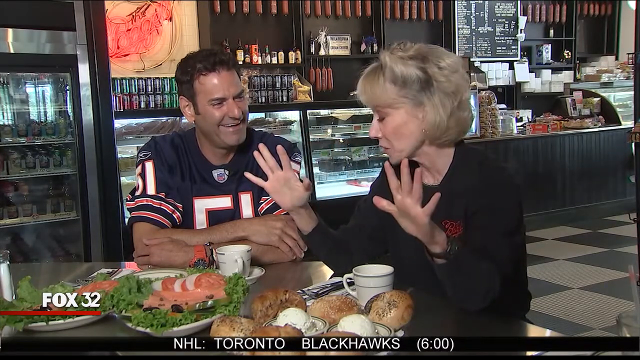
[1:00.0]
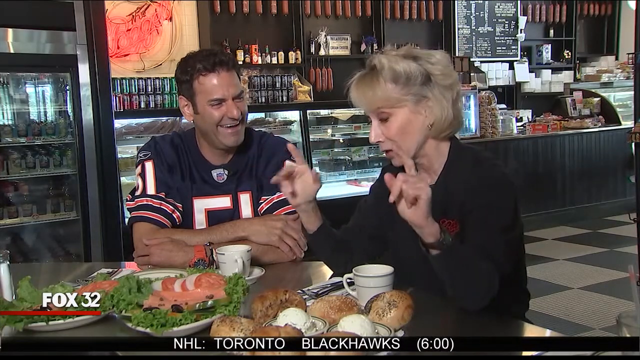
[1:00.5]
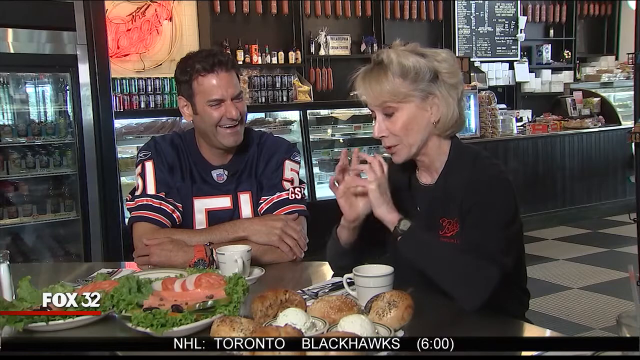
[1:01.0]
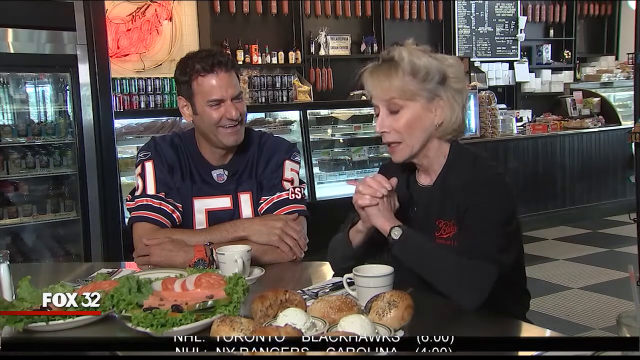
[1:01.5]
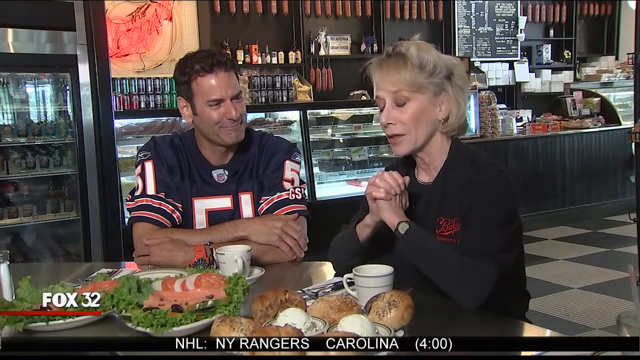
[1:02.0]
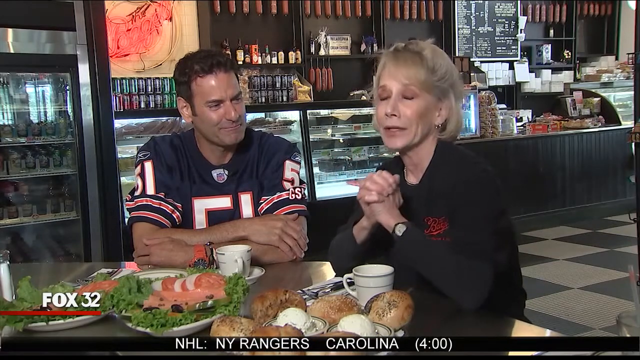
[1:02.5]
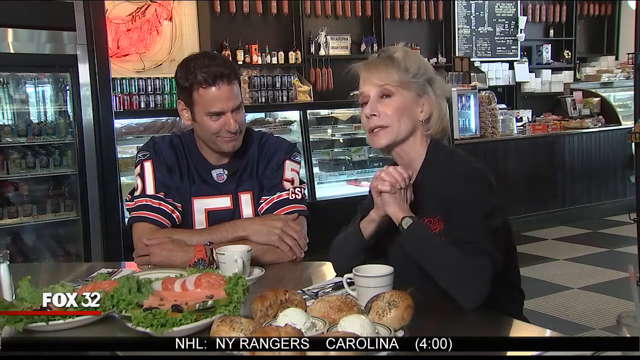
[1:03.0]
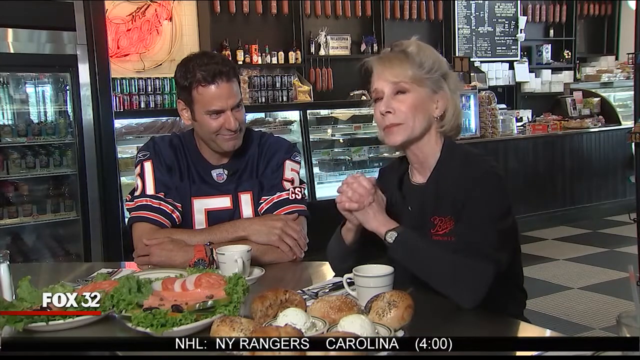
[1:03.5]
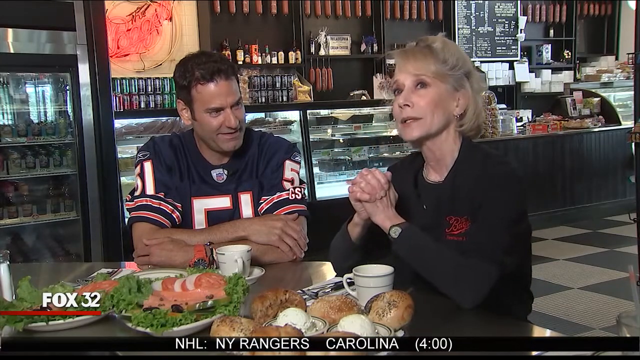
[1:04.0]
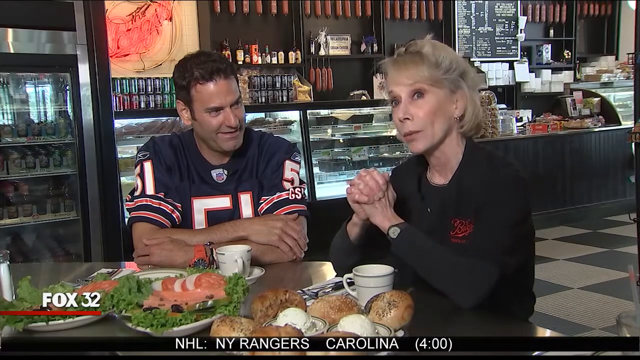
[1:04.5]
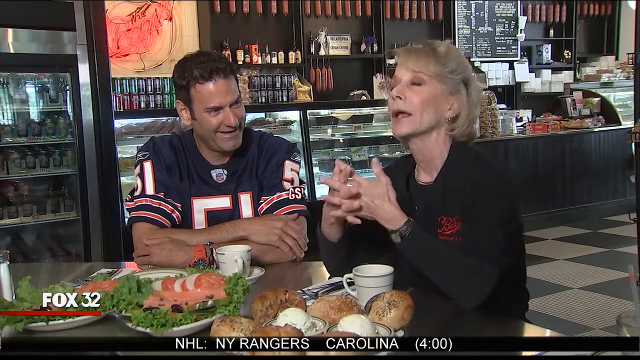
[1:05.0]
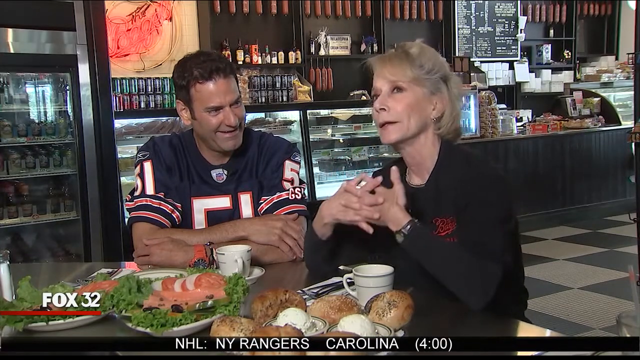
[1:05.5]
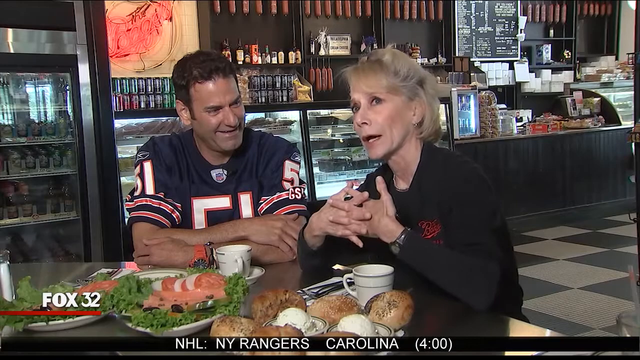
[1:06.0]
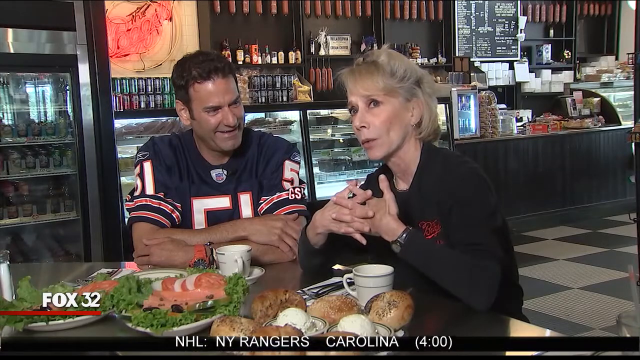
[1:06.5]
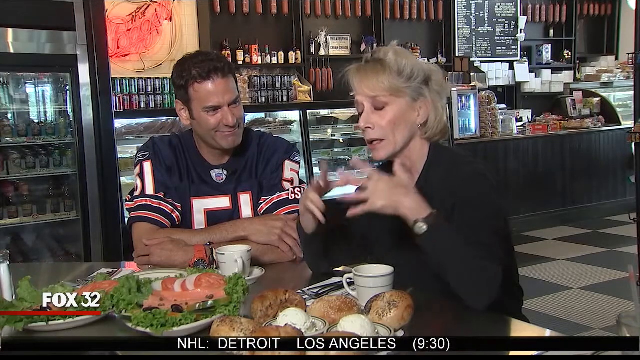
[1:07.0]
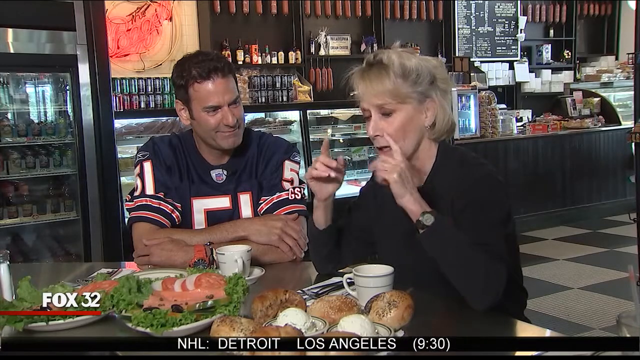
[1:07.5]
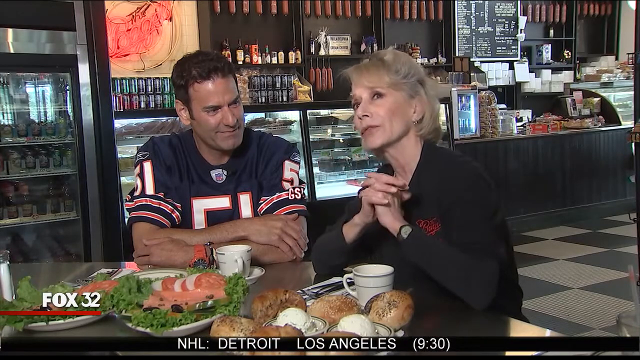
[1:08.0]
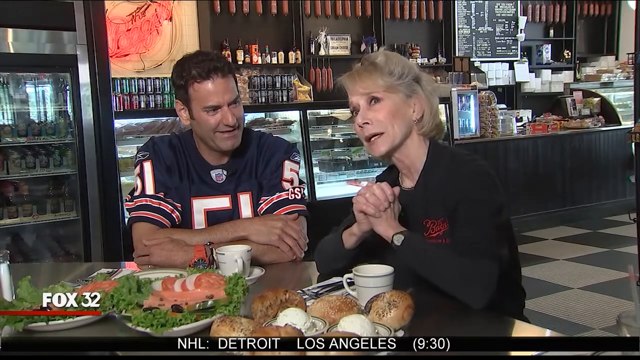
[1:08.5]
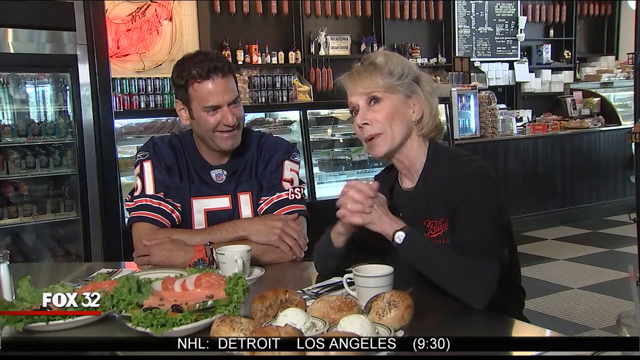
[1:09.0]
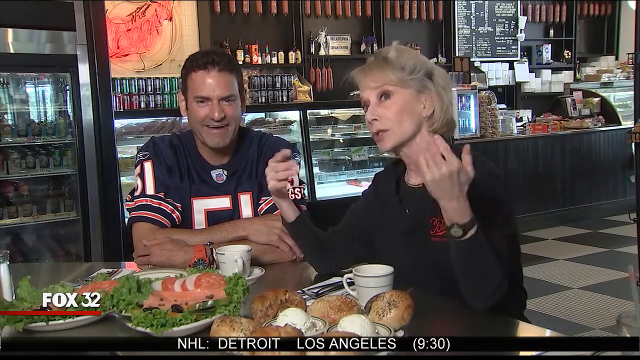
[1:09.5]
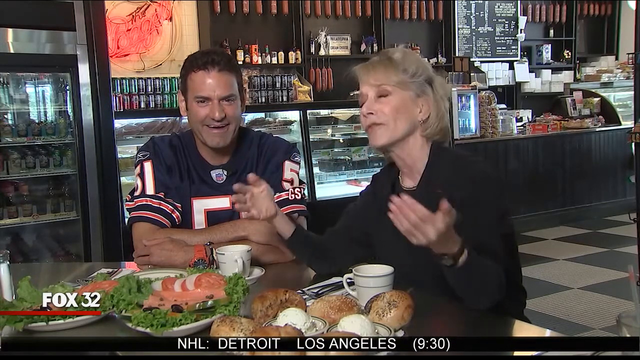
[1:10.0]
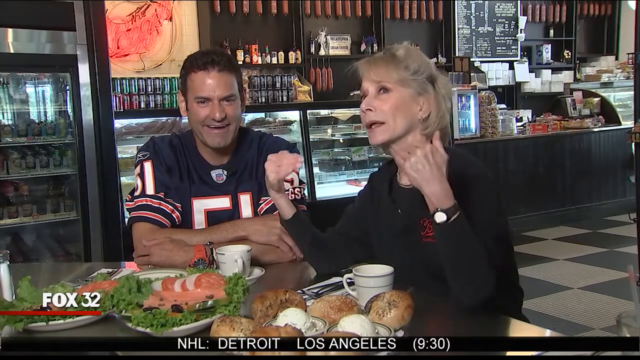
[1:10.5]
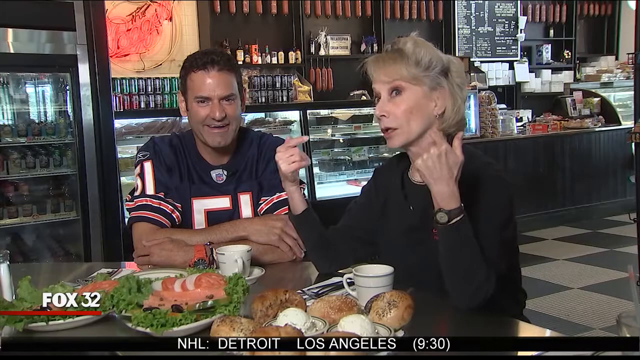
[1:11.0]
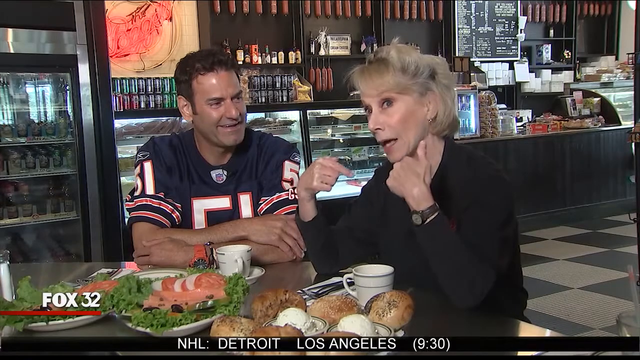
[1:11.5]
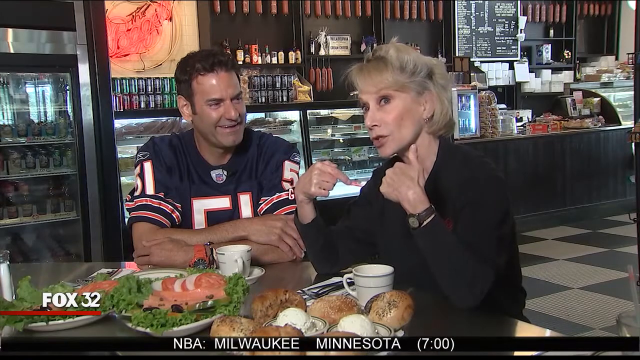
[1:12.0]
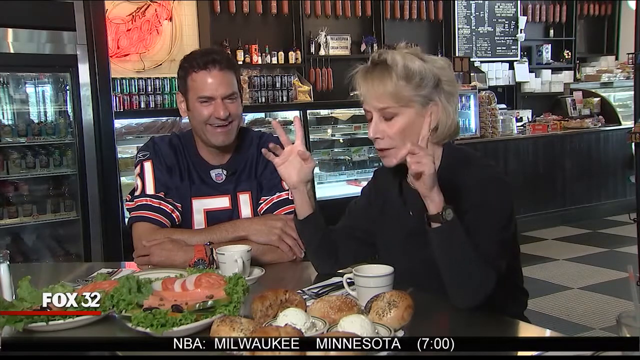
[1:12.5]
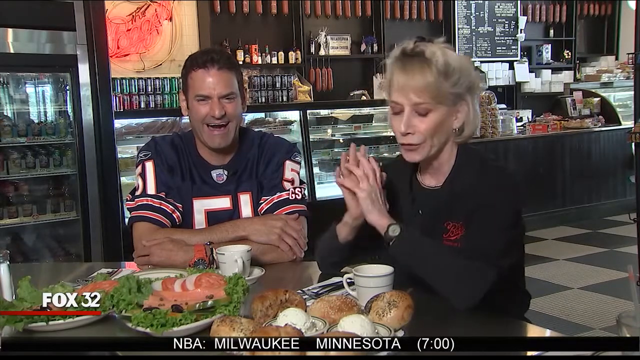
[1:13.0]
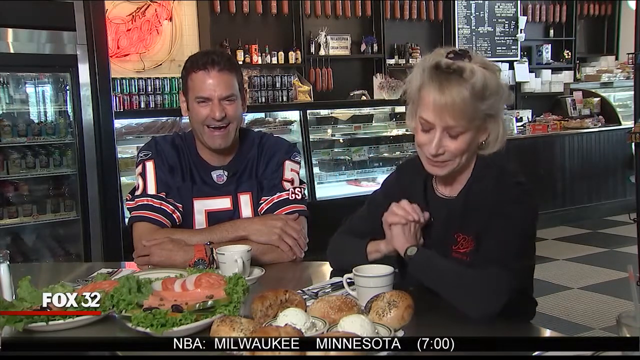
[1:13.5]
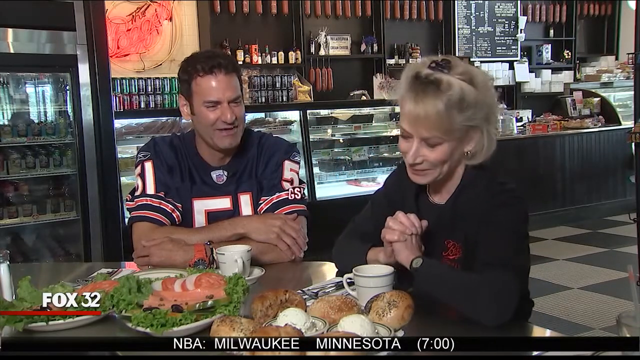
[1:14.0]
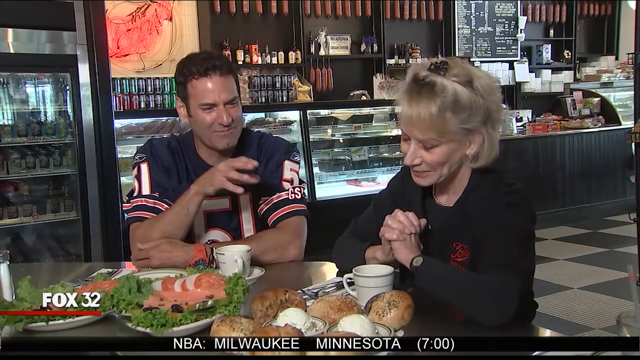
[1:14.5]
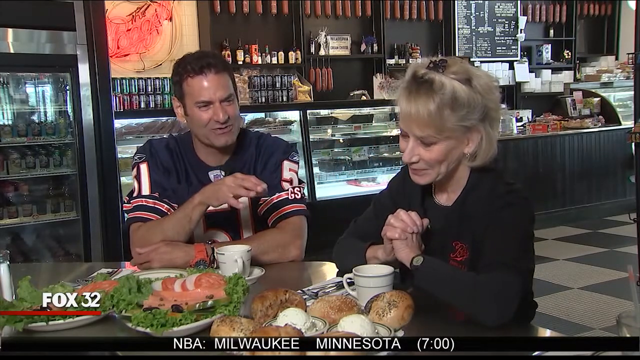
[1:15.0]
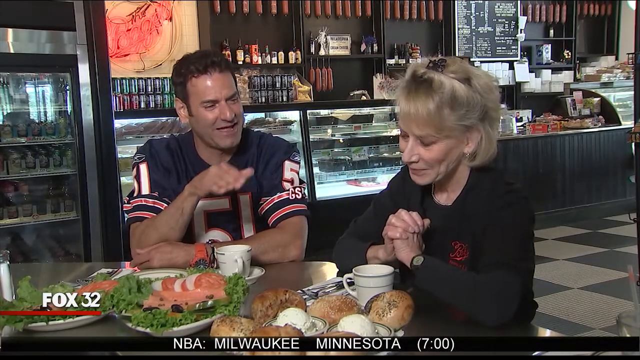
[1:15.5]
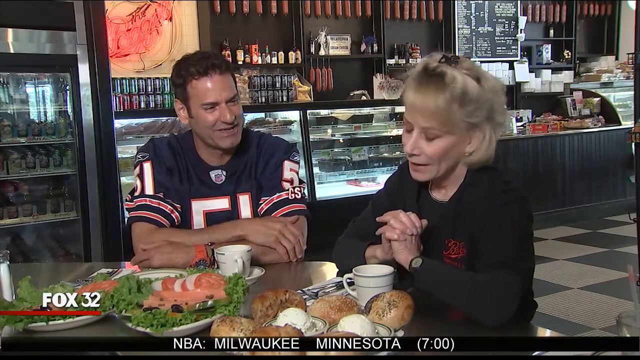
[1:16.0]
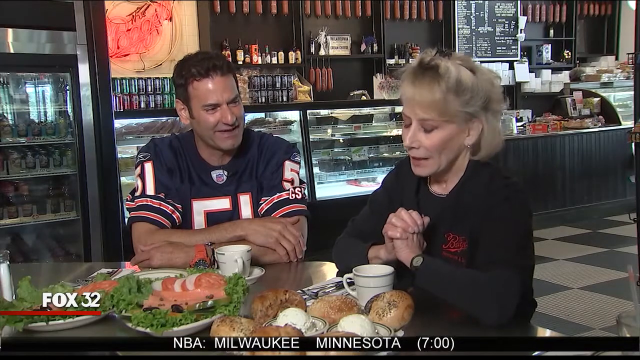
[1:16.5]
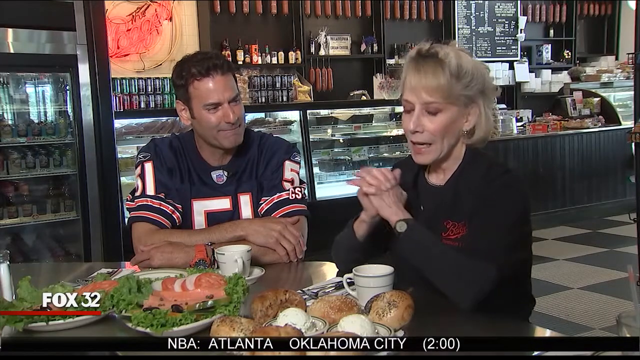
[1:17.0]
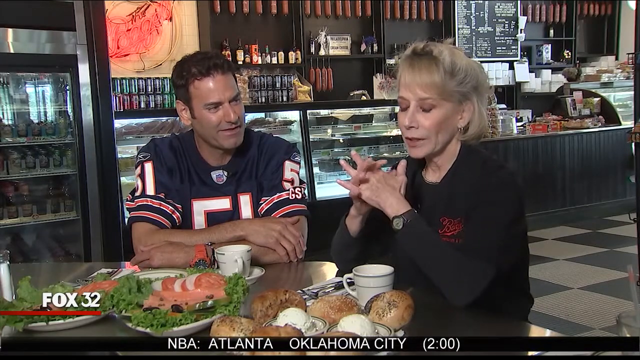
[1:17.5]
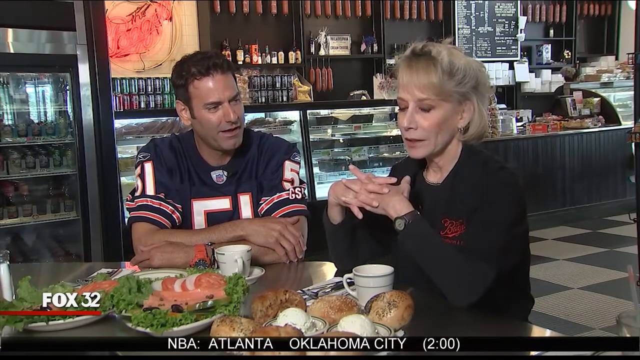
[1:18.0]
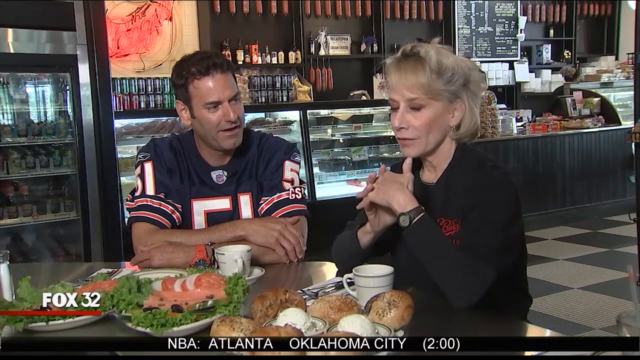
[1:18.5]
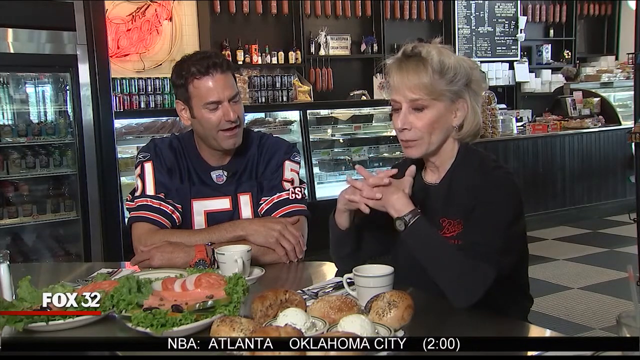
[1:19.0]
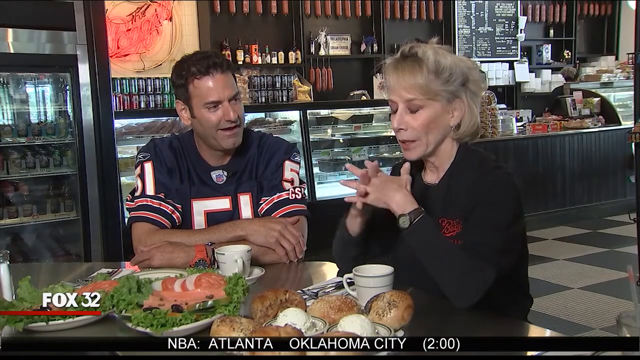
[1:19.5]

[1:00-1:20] A woman with blonde hair, a black shirt and a black watch sits next to a man in a navy football jersey at a restaurant, with food in front of them that appears to be bread with tomato, lettuce and cheese. She talks to him, explaining something, and he listens very attentively, smiles at her and laughs, then talks back. She uses her hands when she talks. NHL results and NBA results, then more NBA results, appear at the bottom of the screen. The channel is Fox 32.